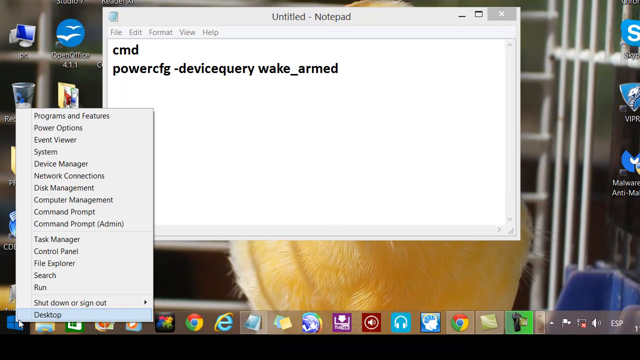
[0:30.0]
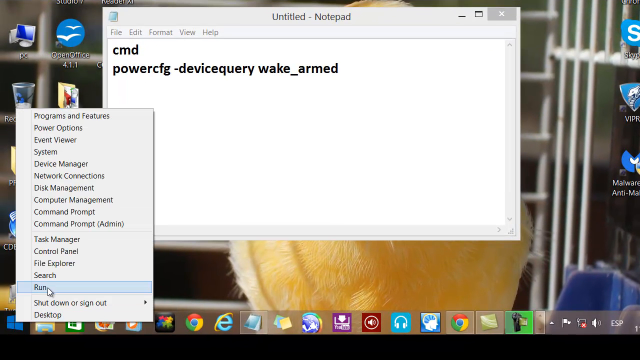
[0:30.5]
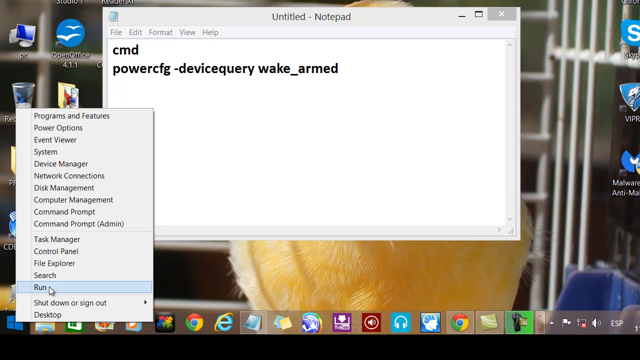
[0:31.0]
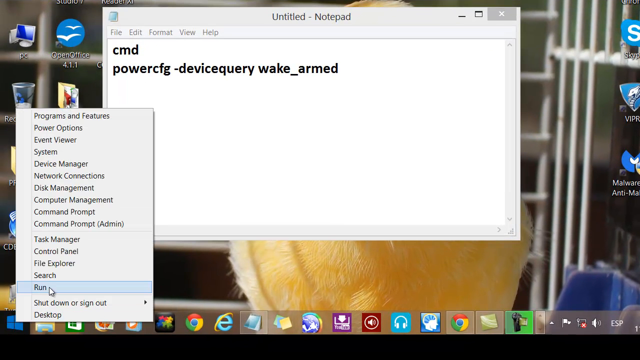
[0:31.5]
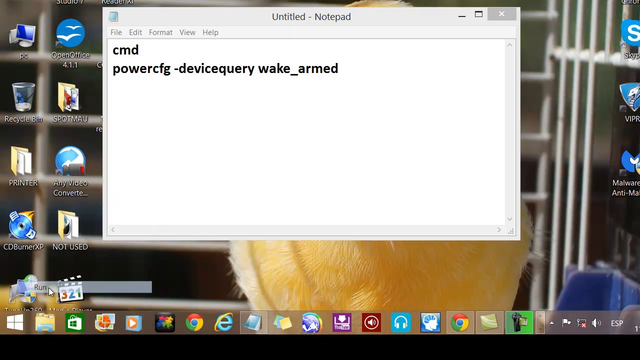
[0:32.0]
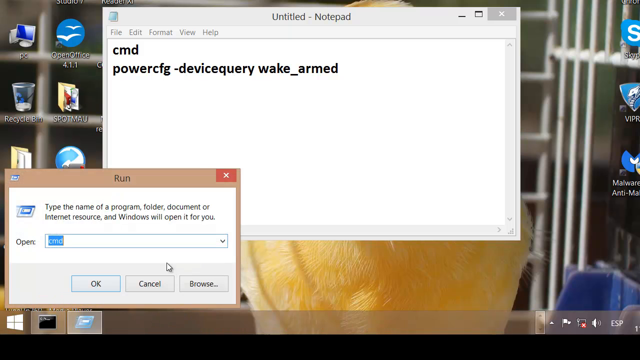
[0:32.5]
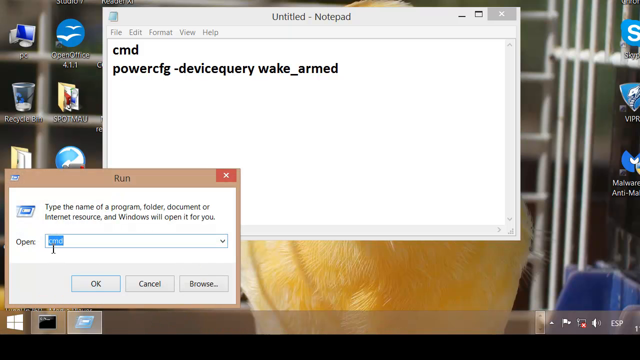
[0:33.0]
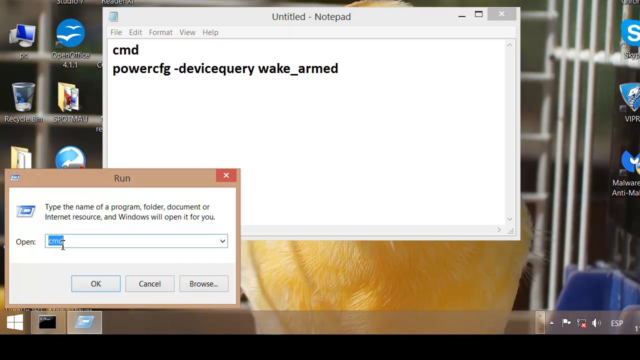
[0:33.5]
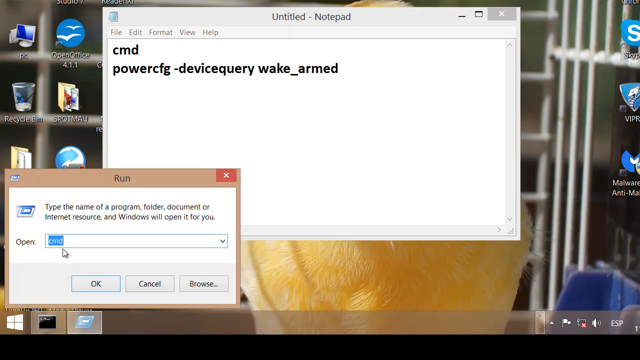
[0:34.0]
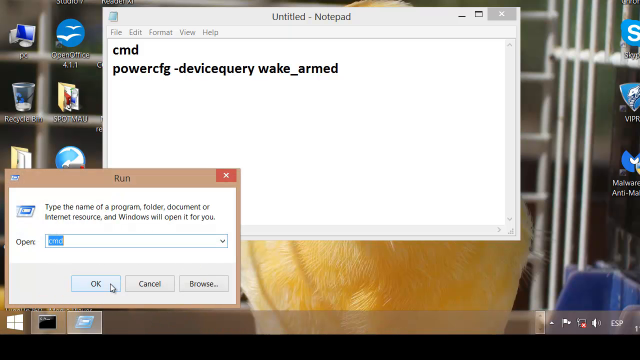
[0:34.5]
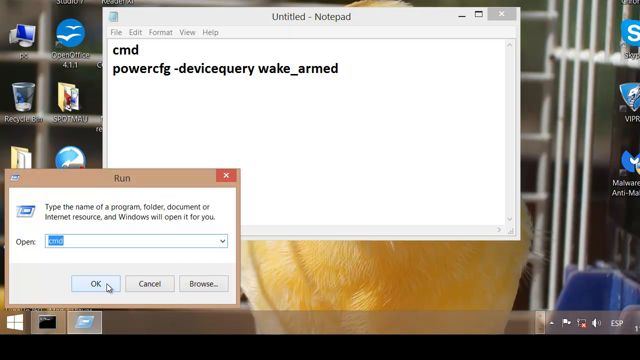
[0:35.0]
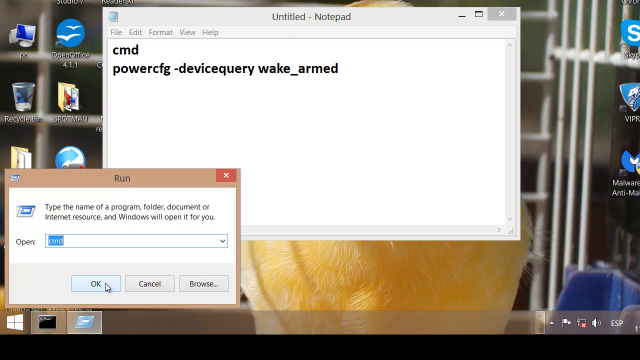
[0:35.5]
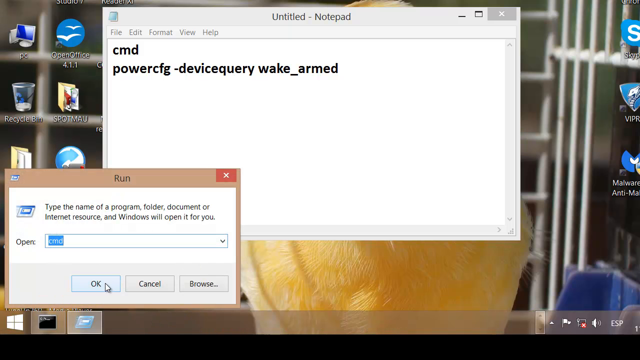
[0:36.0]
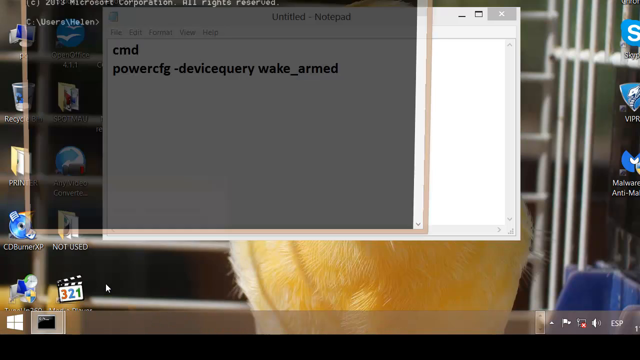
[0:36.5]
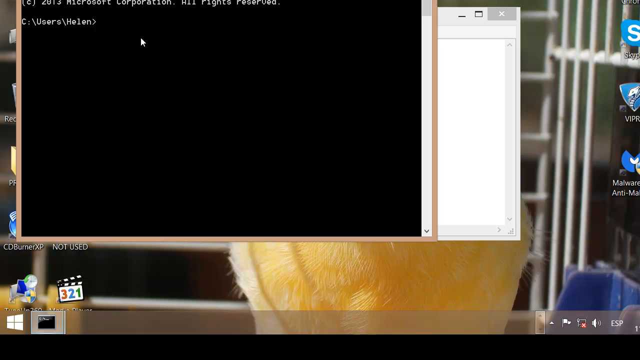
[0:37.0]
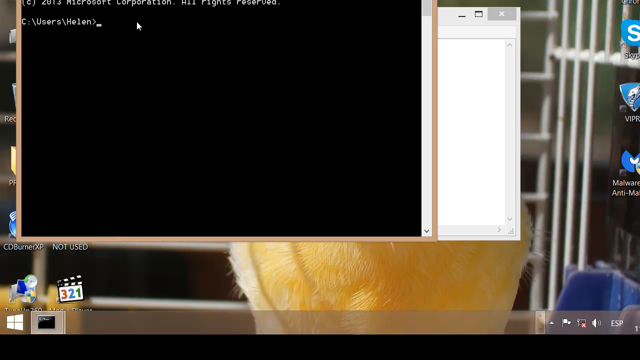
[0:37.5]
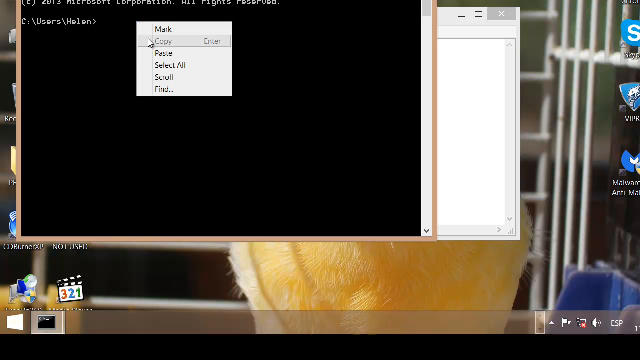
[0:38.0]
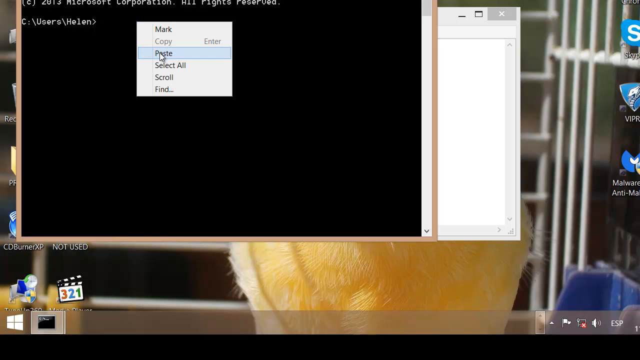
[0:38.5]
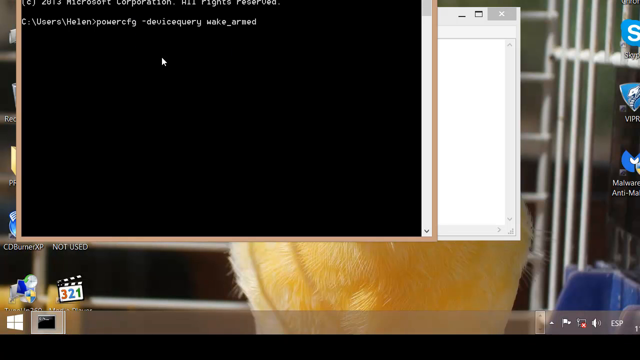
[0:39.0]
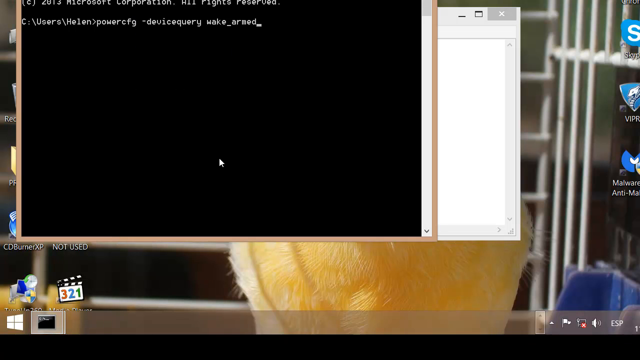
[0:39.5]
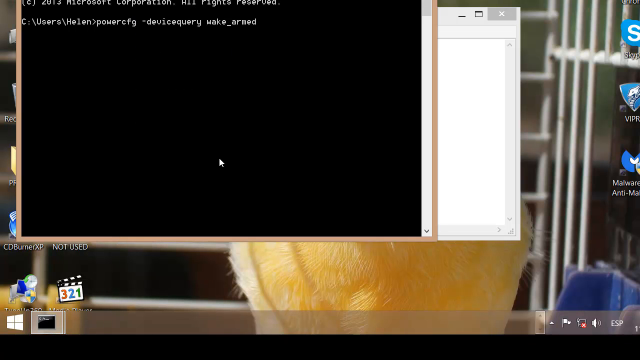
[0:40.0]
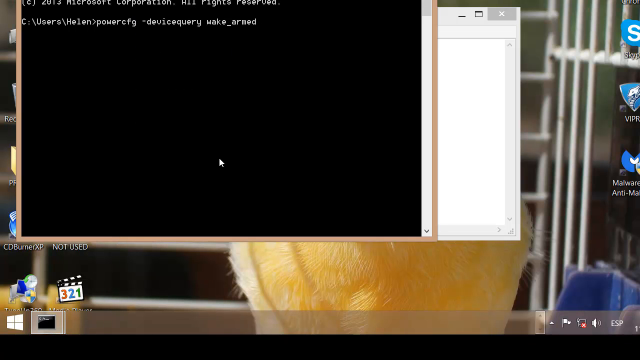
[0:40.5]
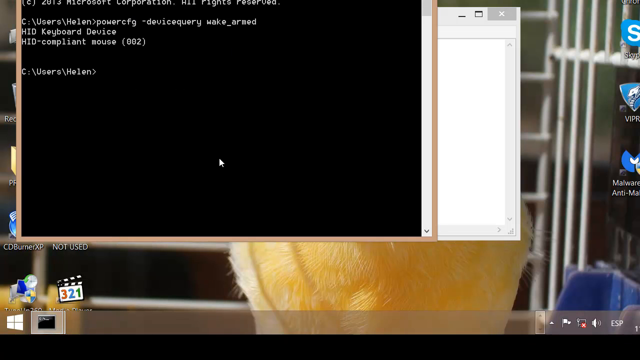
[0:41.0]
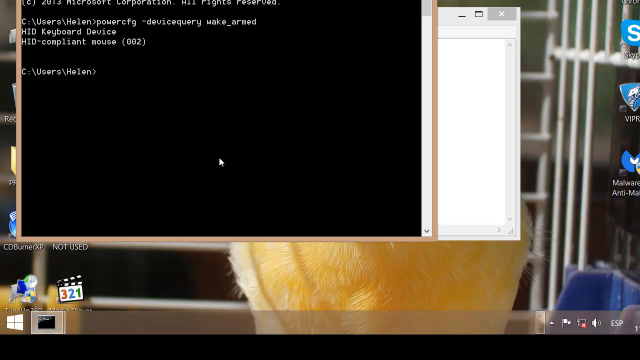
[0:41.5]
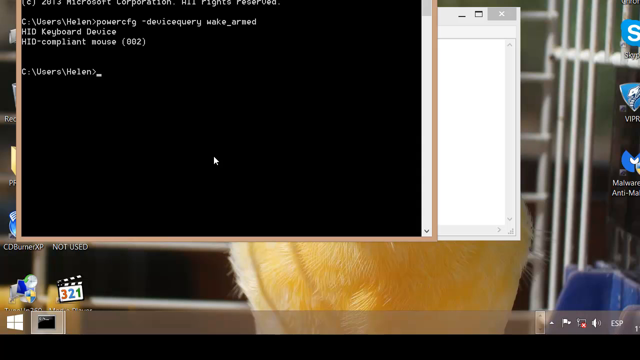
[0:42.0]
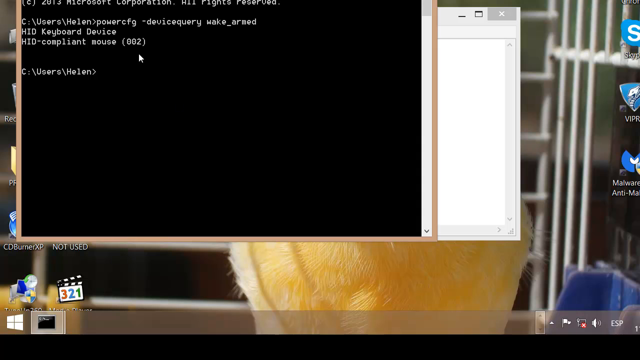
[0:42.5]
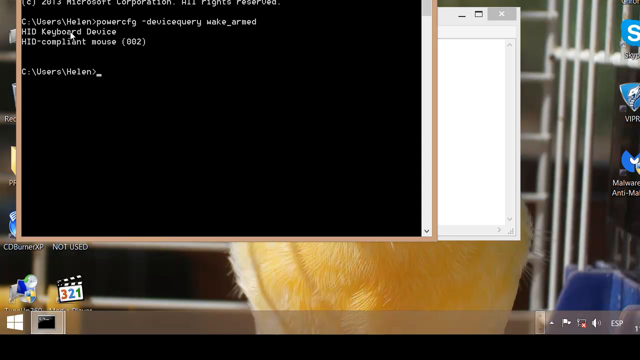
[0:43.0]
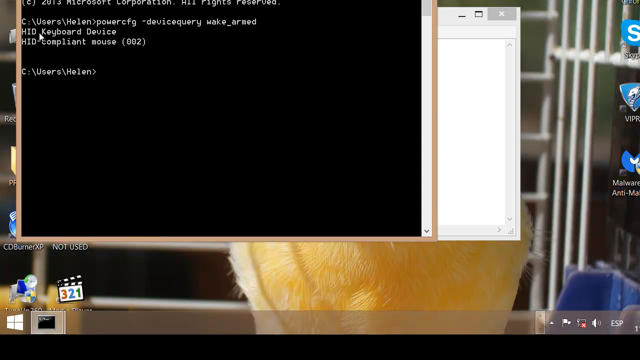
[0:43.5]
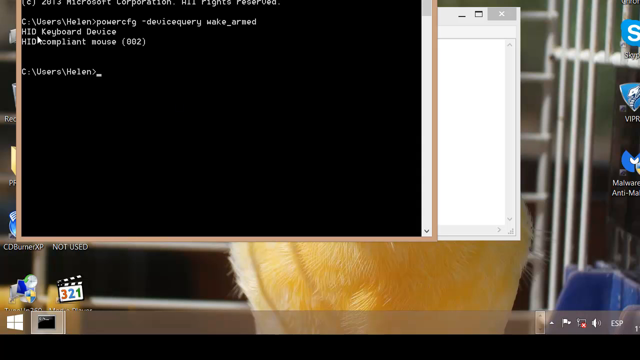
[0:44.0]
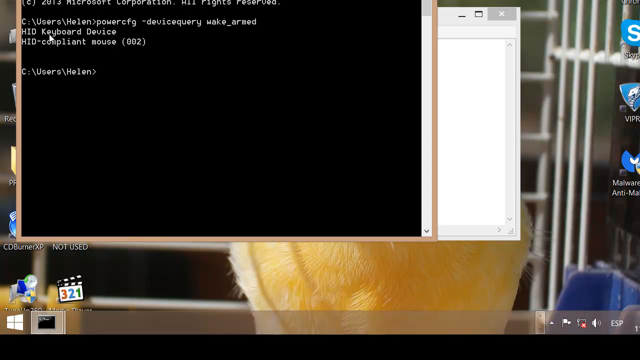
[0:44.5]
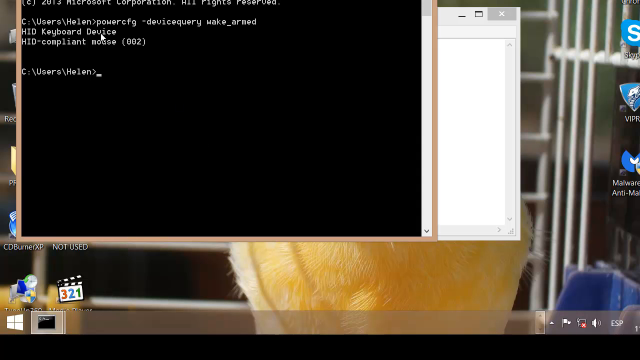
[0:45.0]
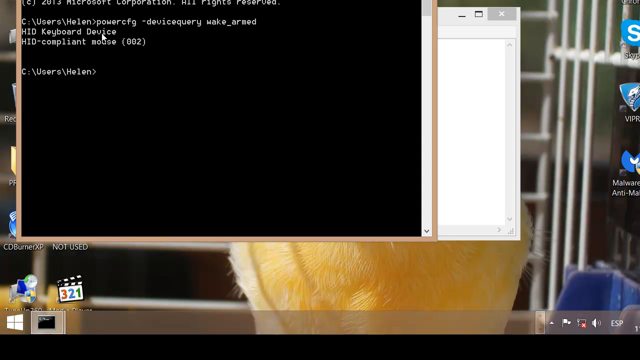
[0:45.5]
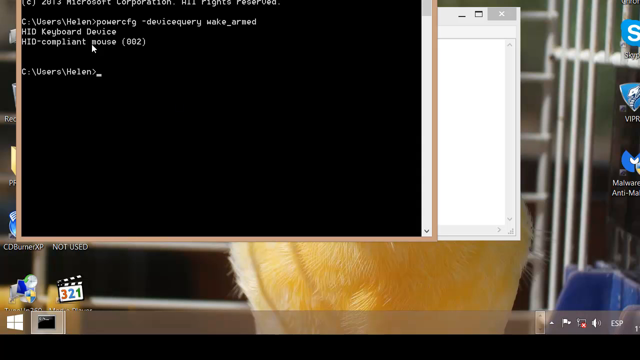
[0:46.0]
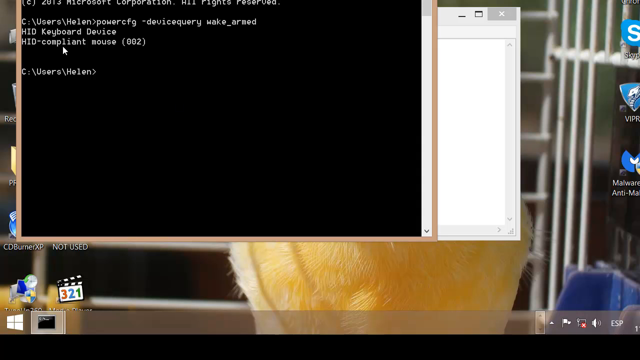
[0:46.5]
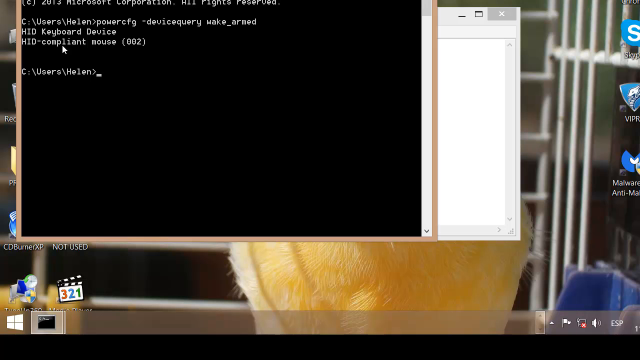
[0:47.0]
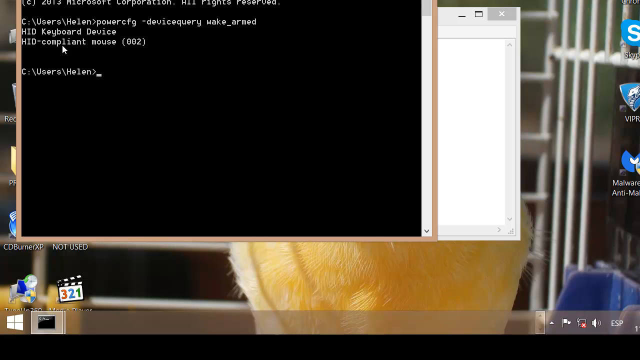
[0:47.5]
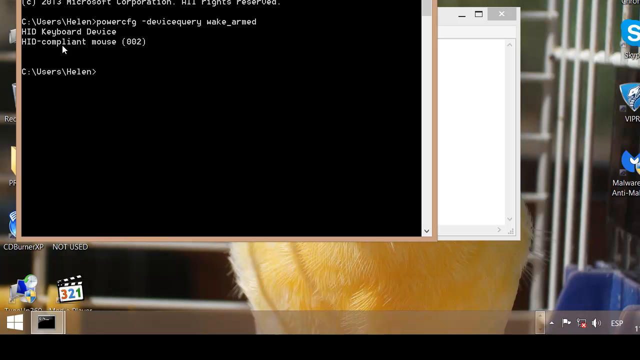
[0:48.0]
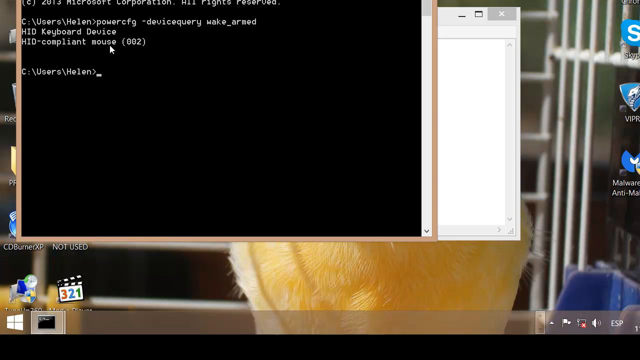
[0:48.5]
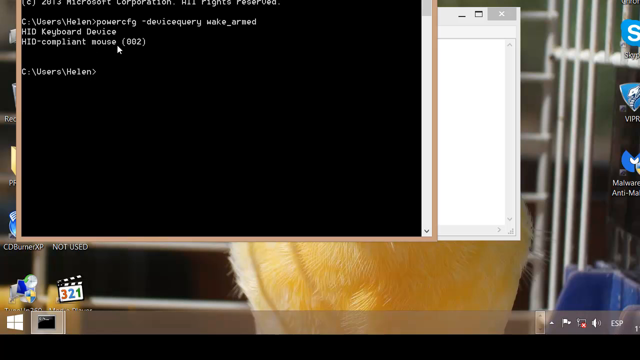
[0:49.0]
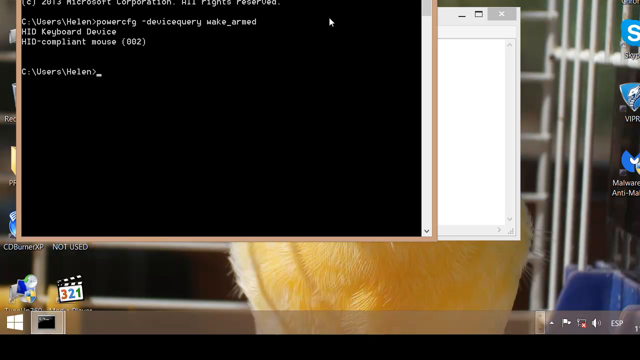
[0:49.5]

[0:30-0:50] The screen capture of the desktop continues as the presenter opens the command prompt section in Windows, step by step, and enters the text that is written in the notepad window on the desktop. The mouse cursor appears to move along the words being referred to. The desktop shows many icons along the bottom taskbar, completely filling it up, and many icons around the screen, with what looks like a yellow duck as the wallpaper behind all the open windows. The movements are very slow and deliberate.